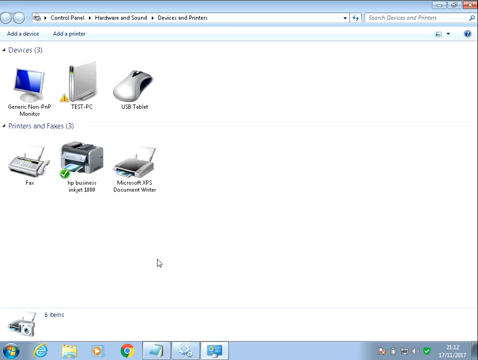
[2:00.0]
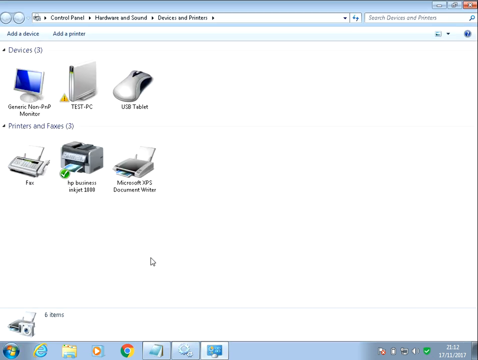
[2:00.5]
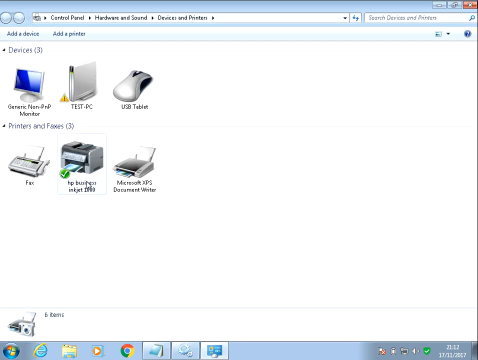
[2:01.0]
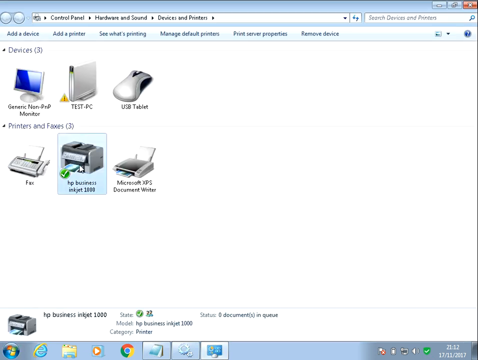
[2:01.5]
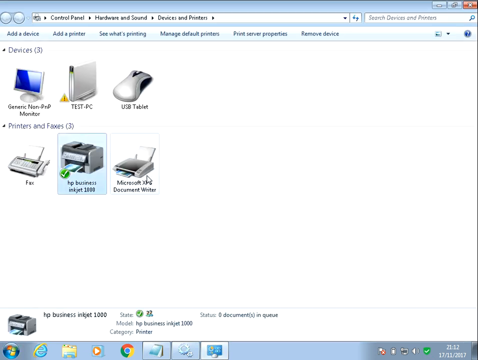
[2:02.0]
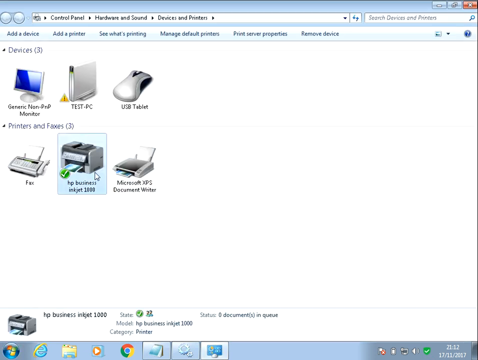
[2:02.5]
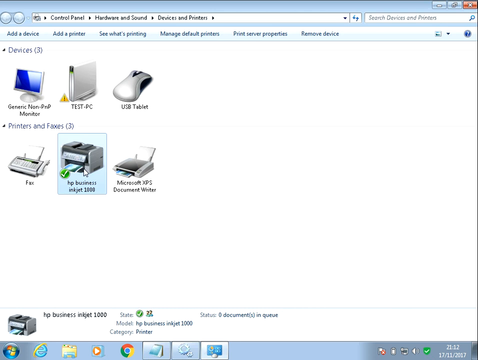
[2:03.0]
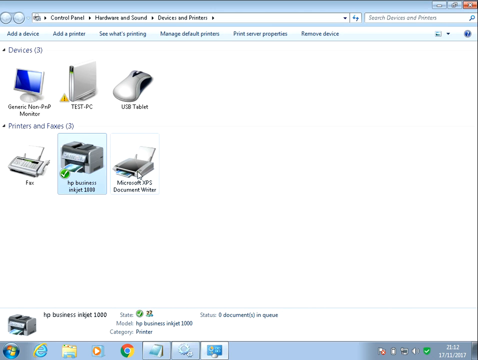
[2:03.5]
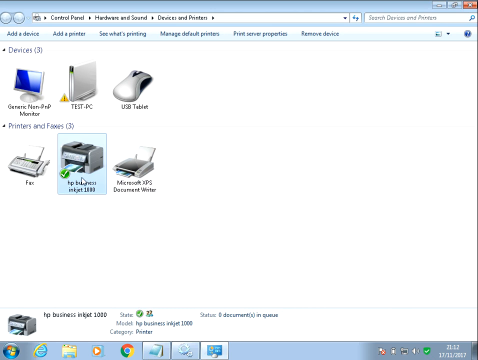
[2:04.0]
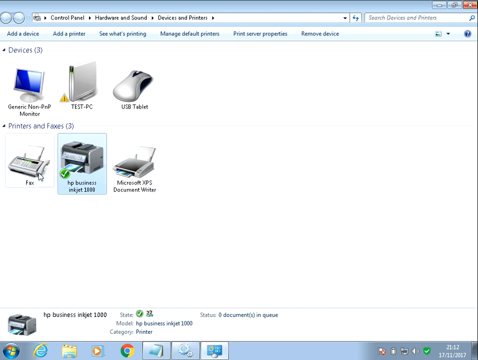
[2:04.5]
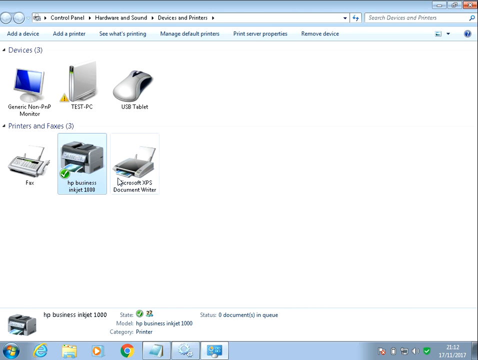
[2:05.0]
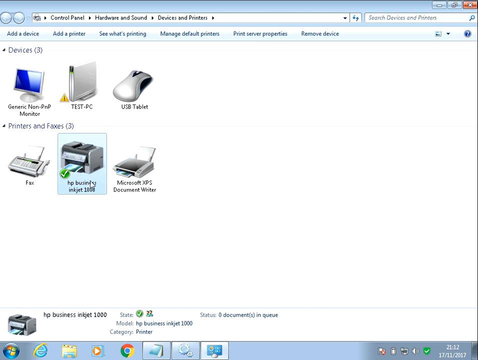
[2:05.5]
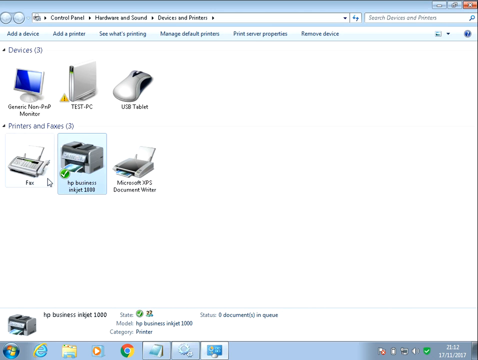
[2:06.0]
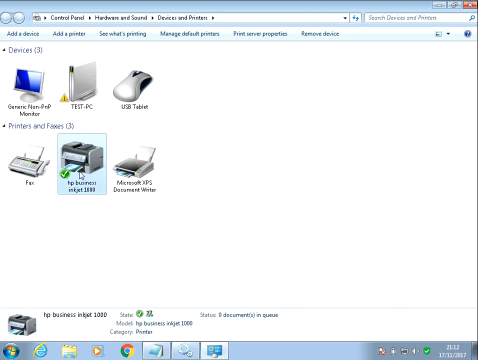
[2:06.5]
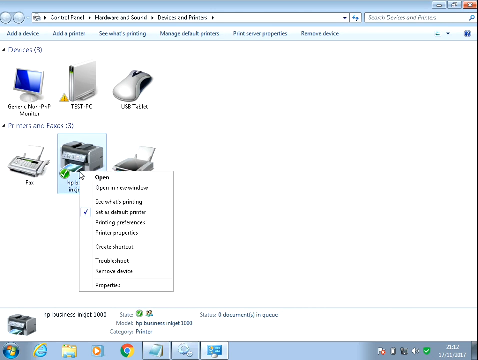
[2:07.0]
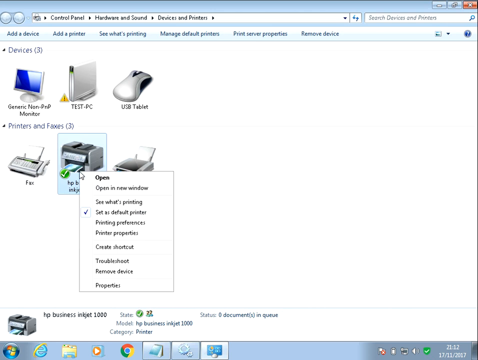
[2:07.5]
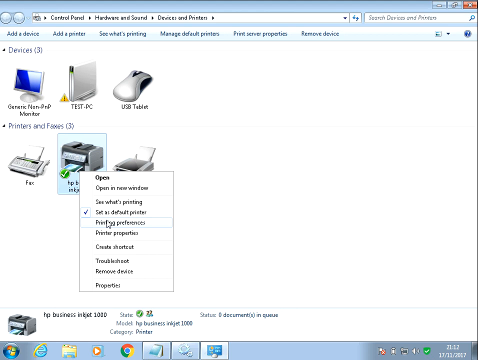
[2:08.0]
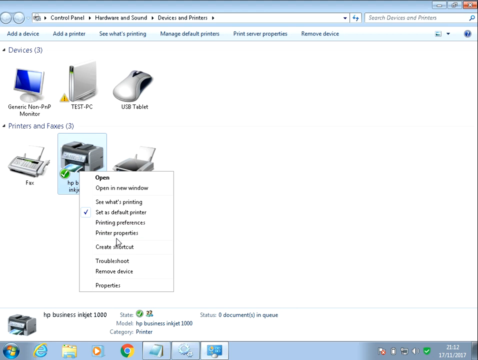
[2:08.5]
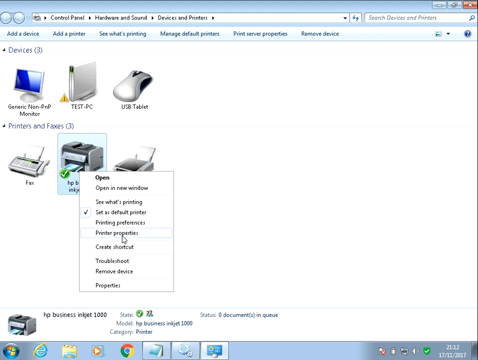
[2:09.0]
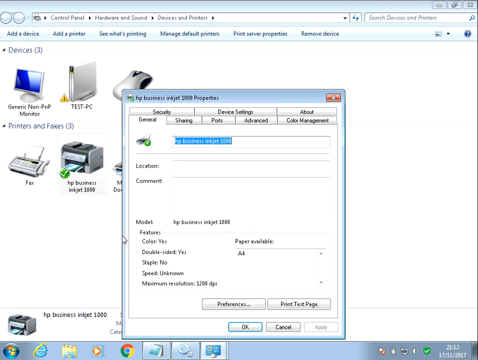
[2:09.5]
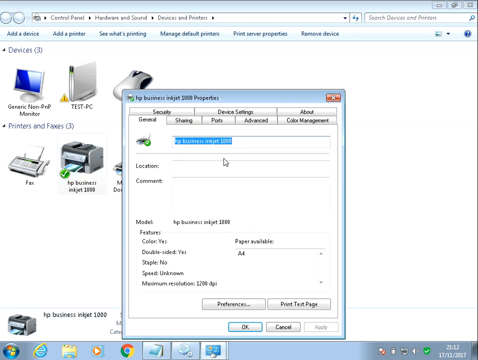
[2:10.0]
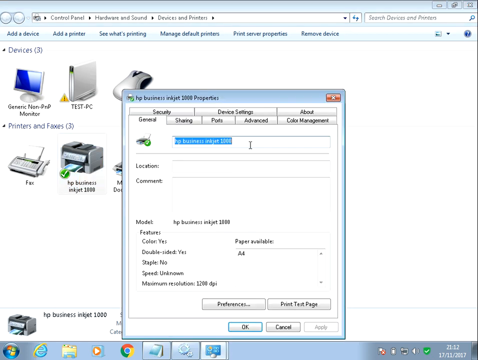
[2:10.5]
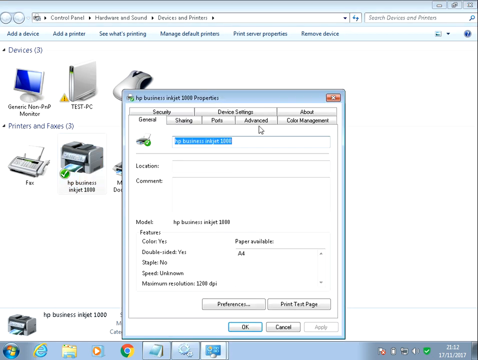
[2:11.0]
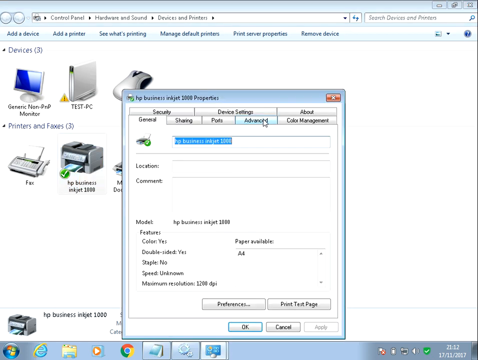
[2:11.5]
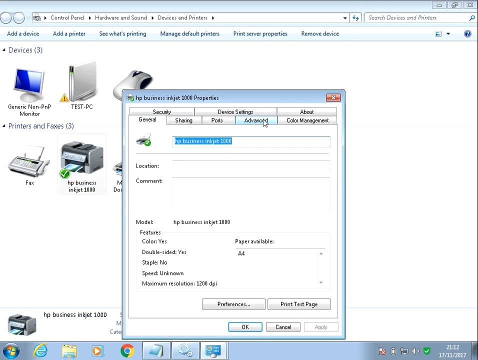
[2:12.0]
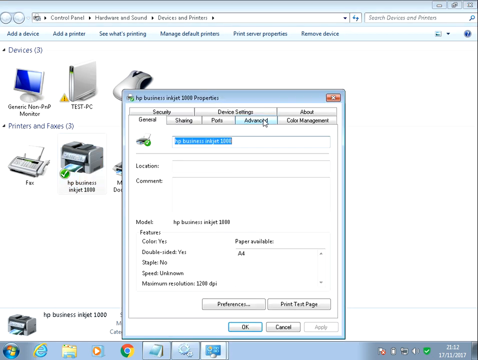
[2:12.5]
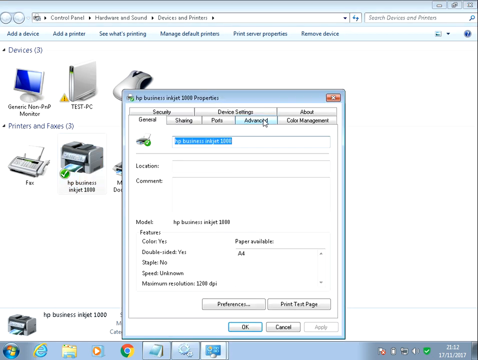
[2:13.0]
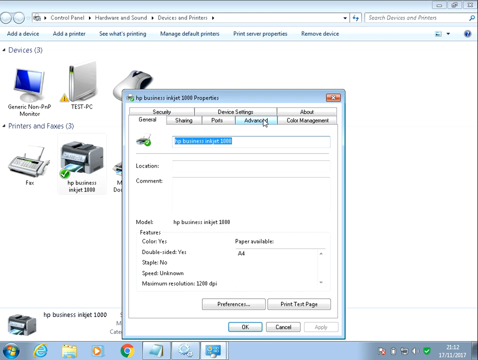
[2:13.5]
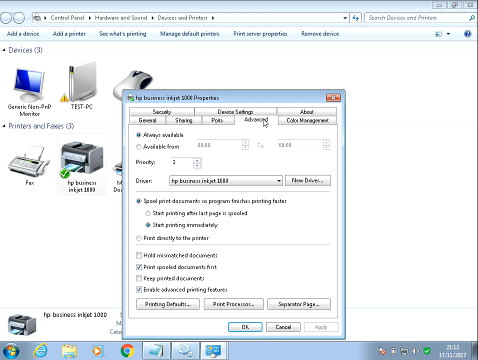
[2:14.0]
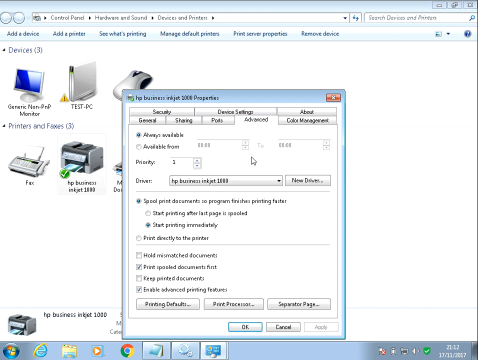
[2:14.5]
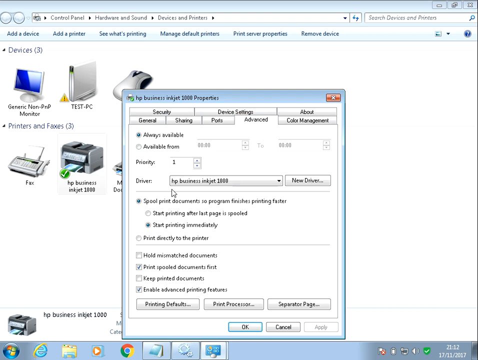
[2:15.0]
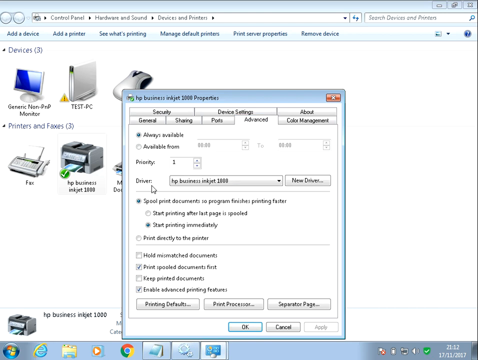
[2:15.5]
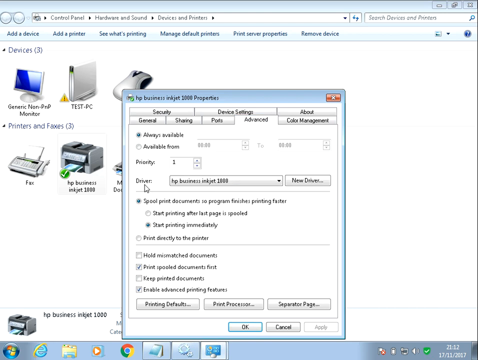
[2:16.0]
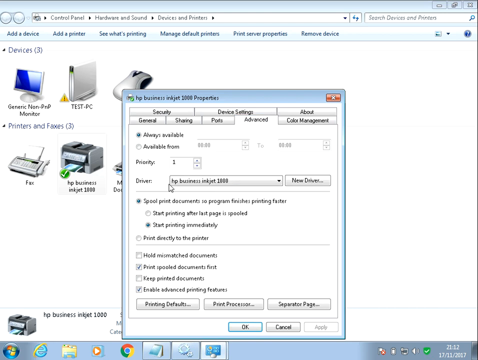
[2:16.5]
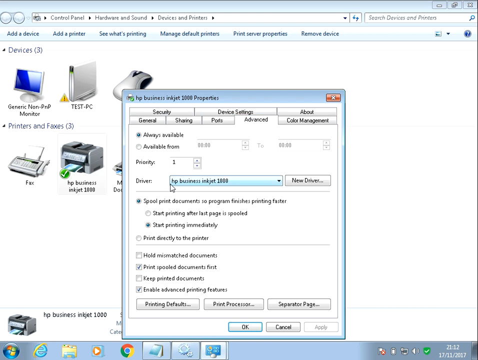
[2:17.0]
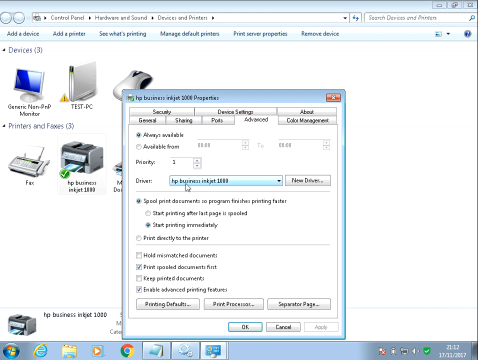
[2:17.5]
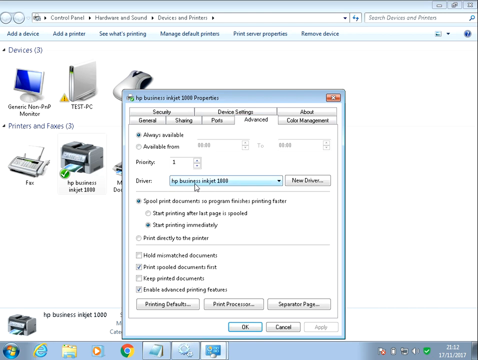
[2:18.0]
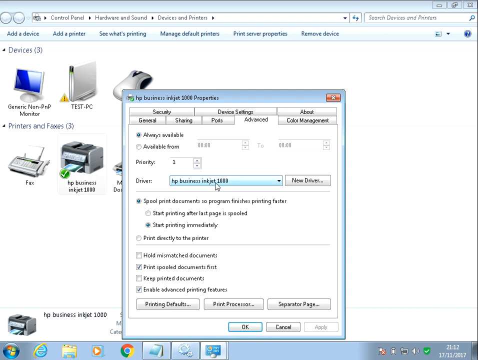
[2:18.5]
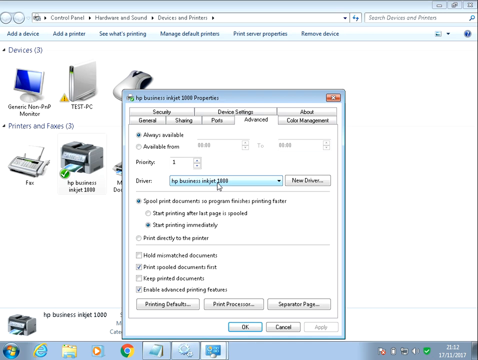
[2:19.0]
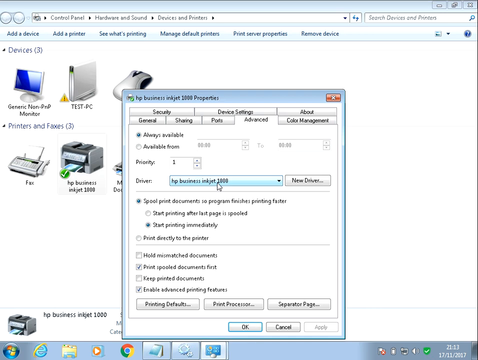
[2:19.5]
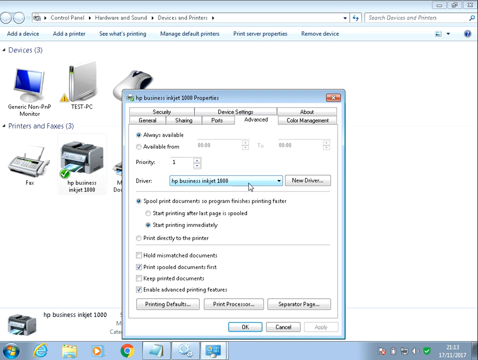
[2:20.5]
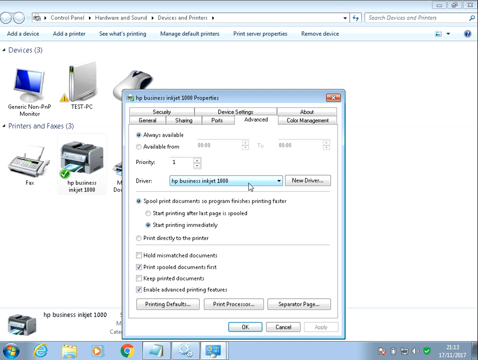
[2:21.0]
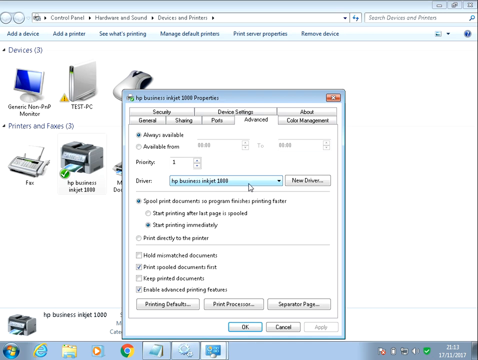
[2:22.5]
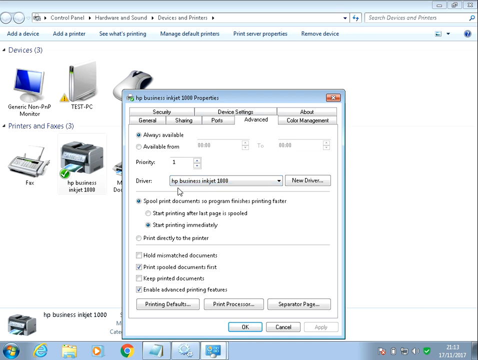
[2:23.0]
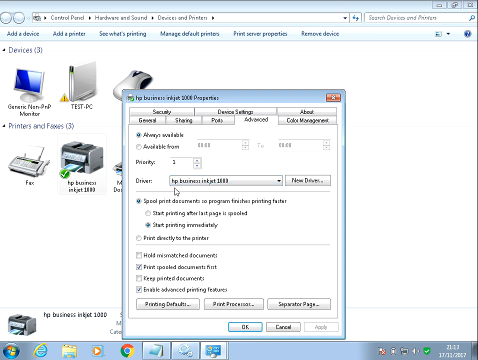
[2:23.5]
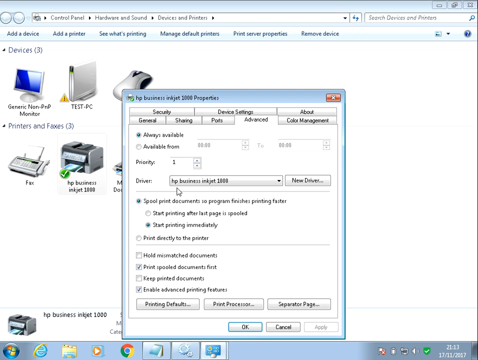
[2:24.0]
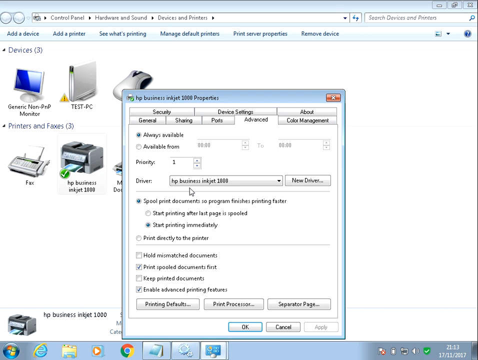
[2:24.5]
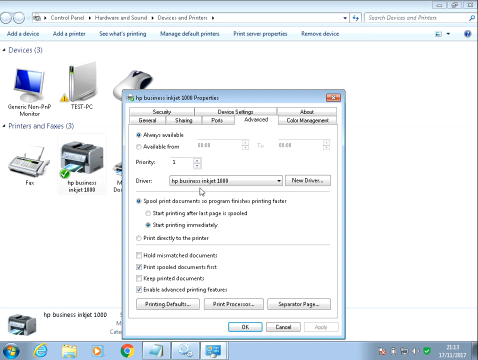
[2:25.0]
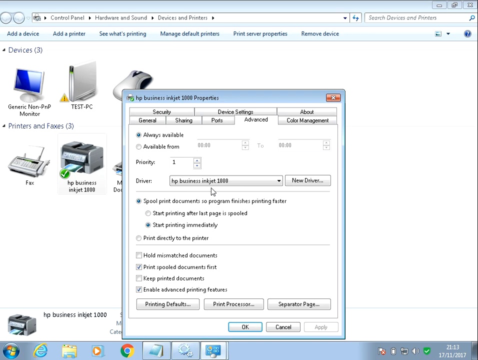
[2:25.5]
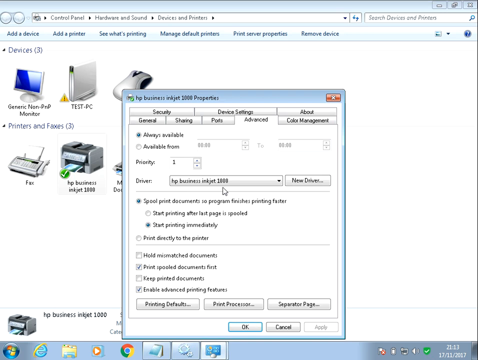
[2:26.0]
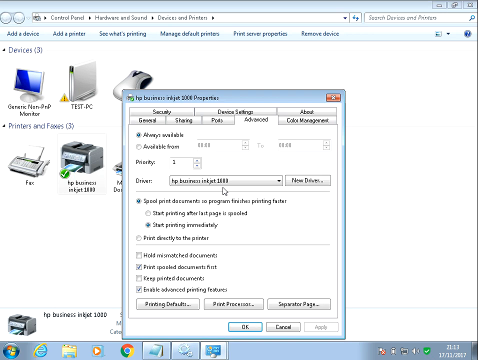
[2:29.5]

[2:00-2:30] The frame is a little wider than it is tall. The Control Panel is open at Hardware and Sound, then Devices and Printers, as indicated by the path bar at the very top of the window. Under Devices are generic non-pmp monitor, test pc and usb tablet. Under Printers and Faxes are three options: fax, hp business inkjet 1000, which is highlighted and checked, and microsoft xps document writer. The user arrows over the bottom three options a few times each, then right-clicks the printer and opens hp business inkjet 2000 properties. He goes to the Advanced tab, where the drop-down box in the driver section has hp business inkjet 1000 selected, and he keeps arrowing left and right over that option.